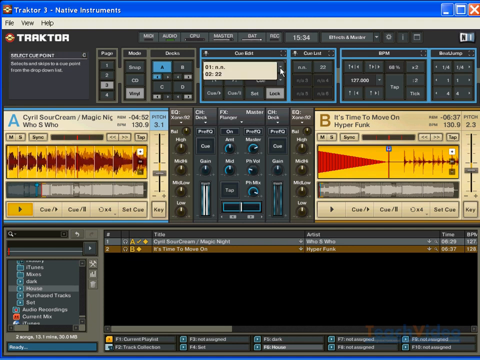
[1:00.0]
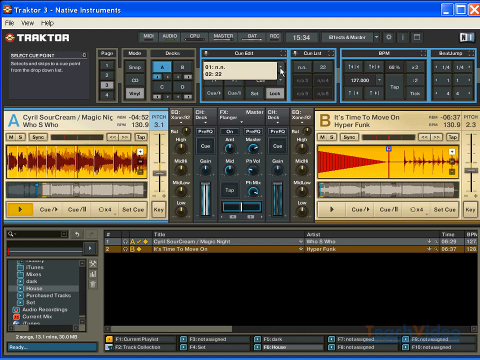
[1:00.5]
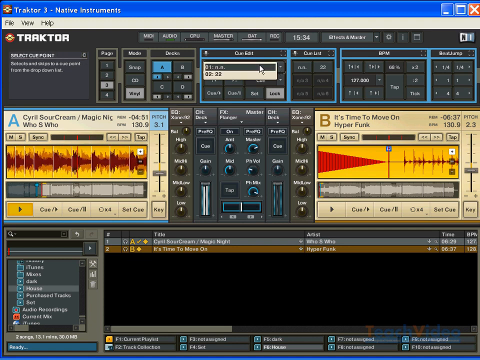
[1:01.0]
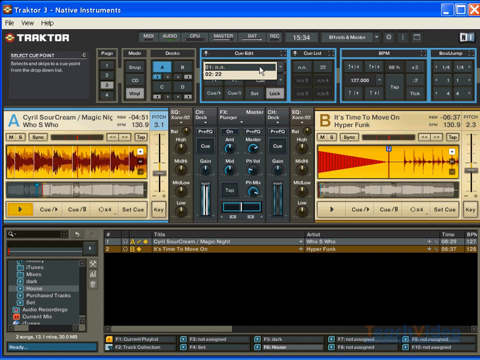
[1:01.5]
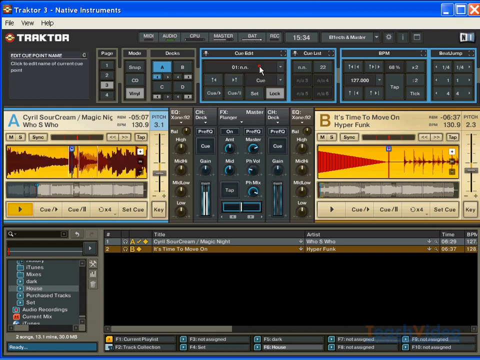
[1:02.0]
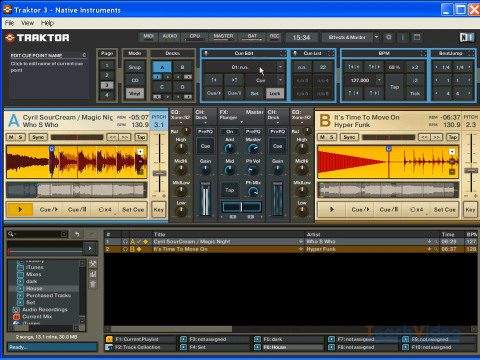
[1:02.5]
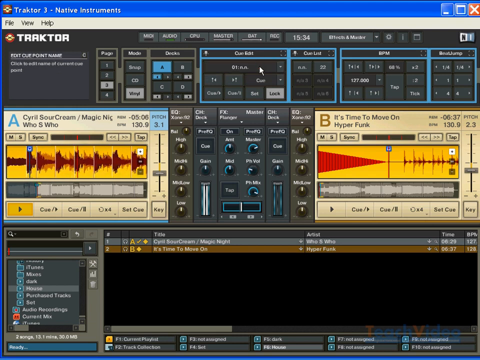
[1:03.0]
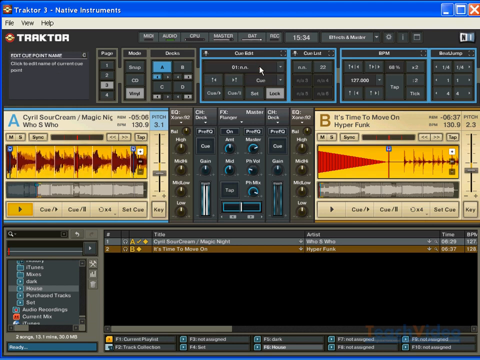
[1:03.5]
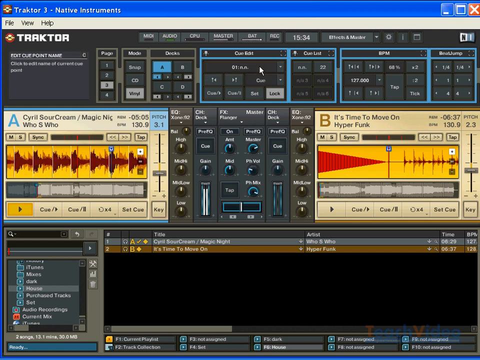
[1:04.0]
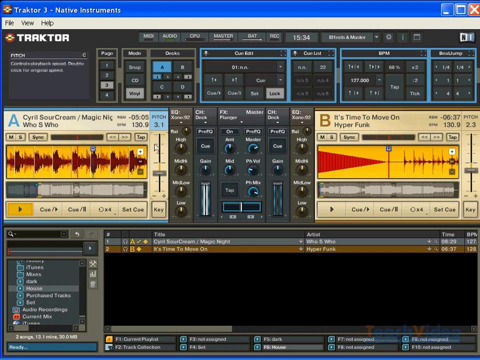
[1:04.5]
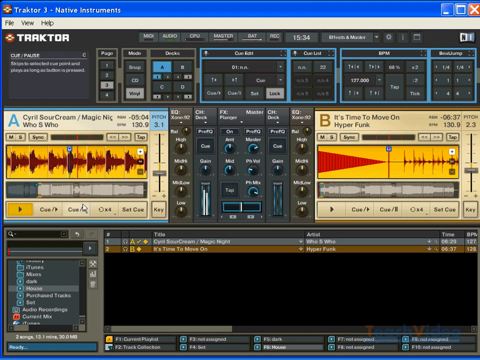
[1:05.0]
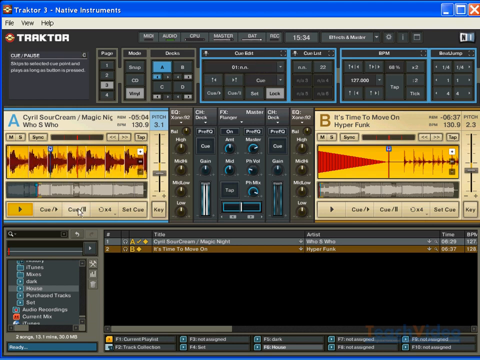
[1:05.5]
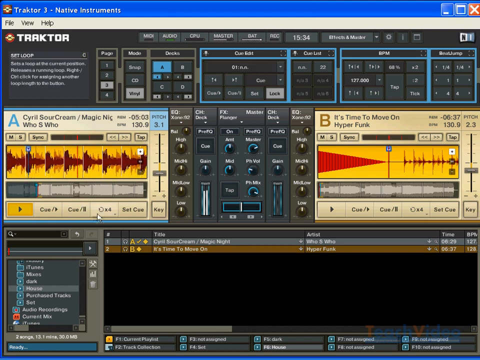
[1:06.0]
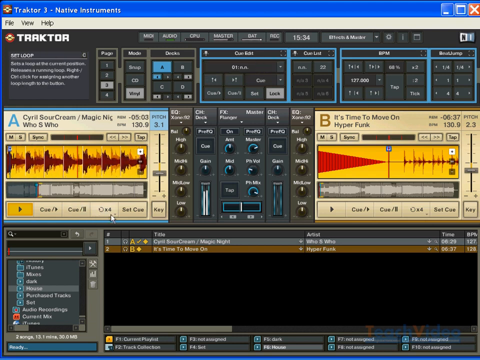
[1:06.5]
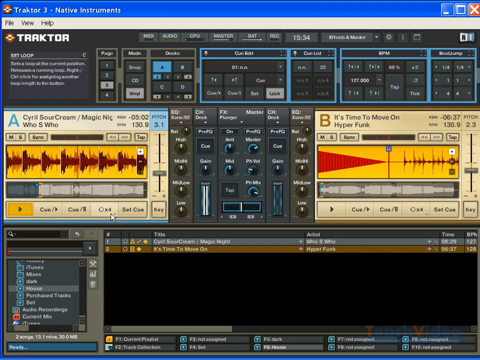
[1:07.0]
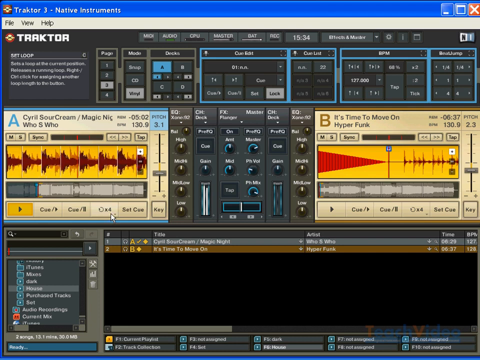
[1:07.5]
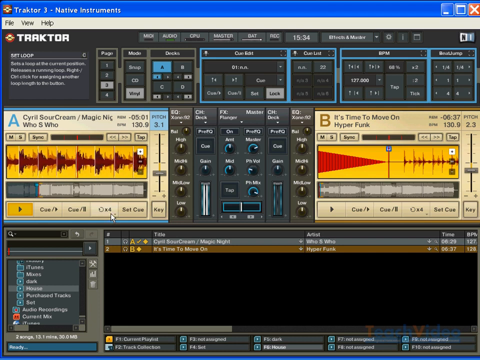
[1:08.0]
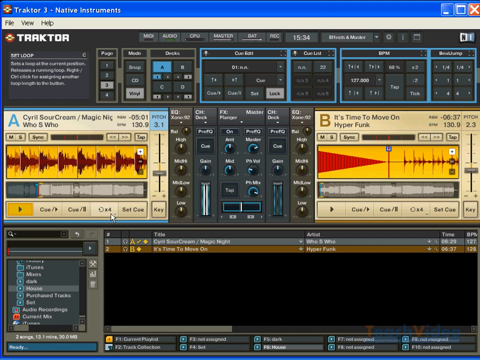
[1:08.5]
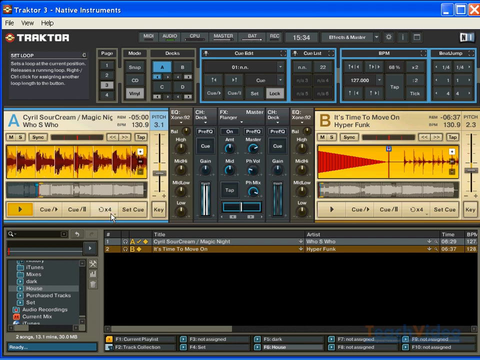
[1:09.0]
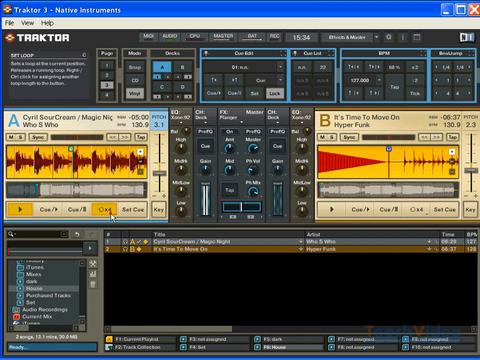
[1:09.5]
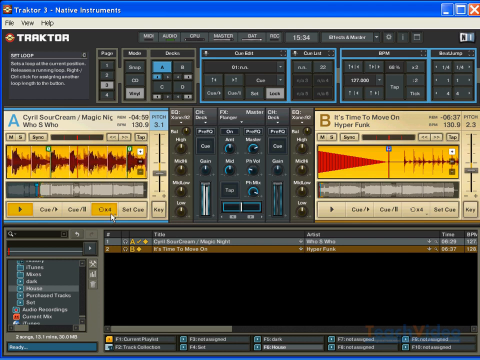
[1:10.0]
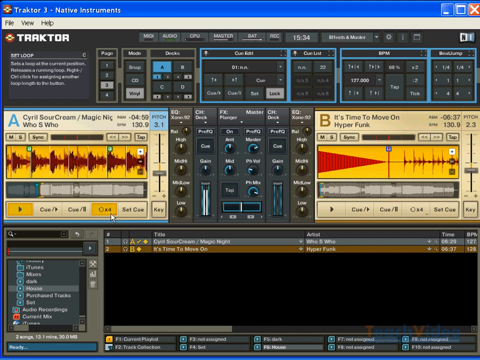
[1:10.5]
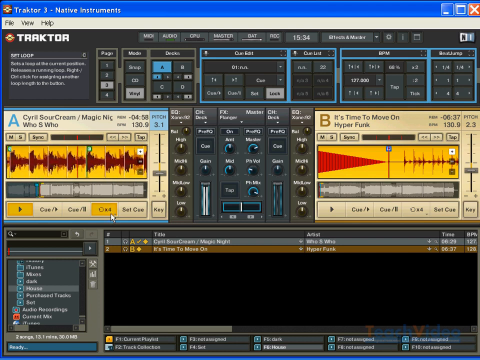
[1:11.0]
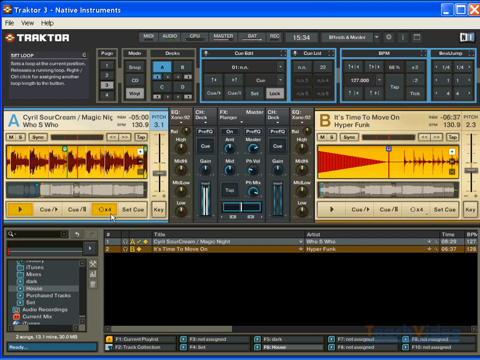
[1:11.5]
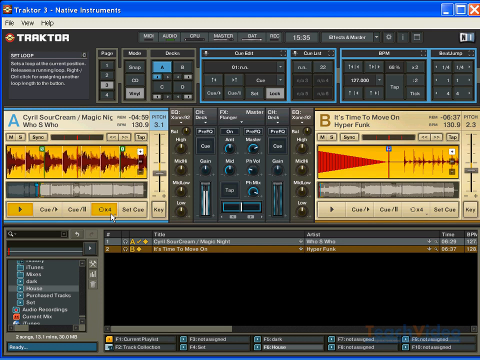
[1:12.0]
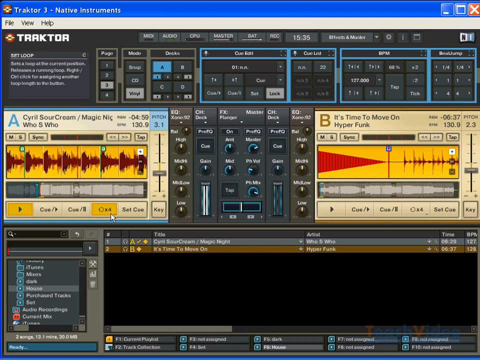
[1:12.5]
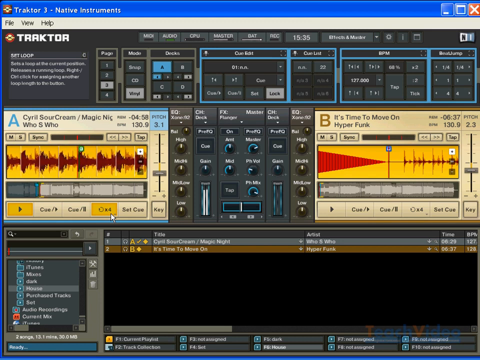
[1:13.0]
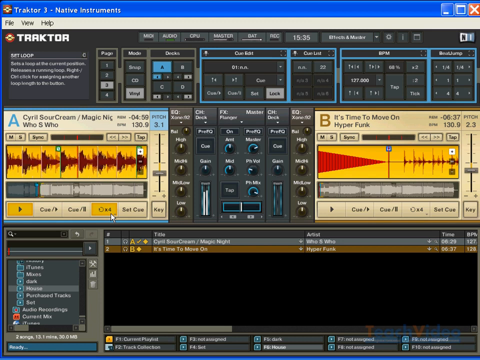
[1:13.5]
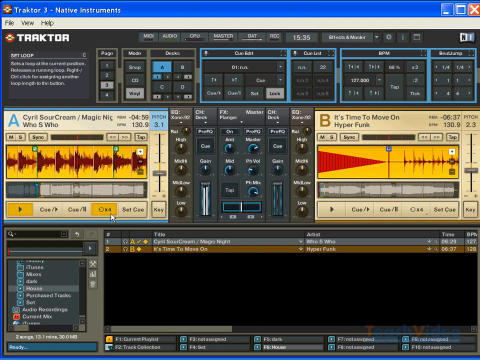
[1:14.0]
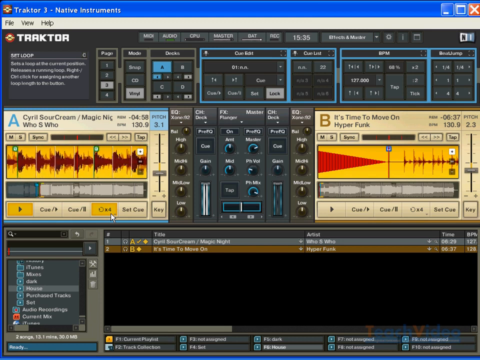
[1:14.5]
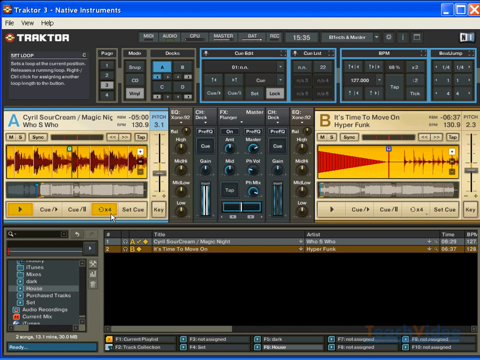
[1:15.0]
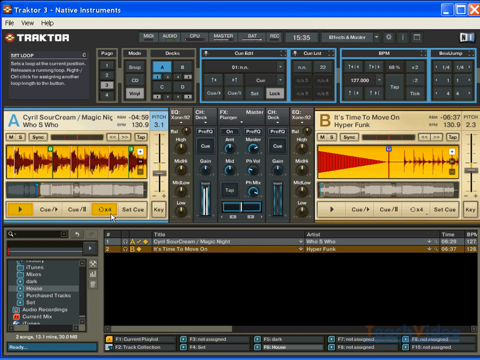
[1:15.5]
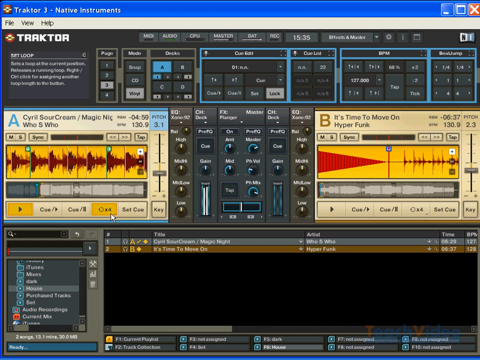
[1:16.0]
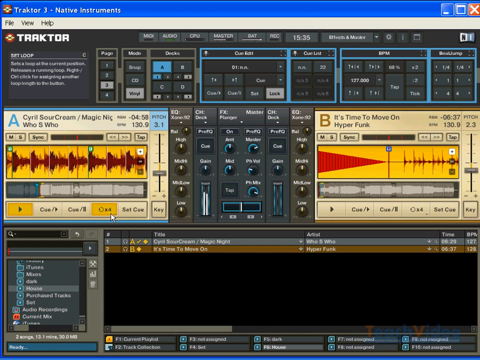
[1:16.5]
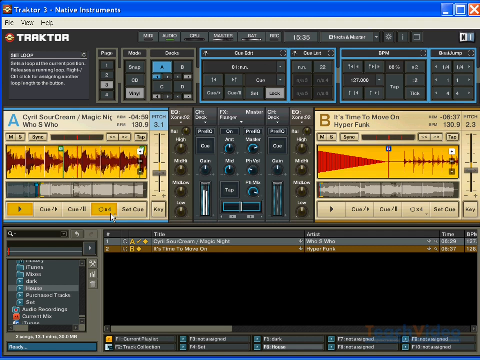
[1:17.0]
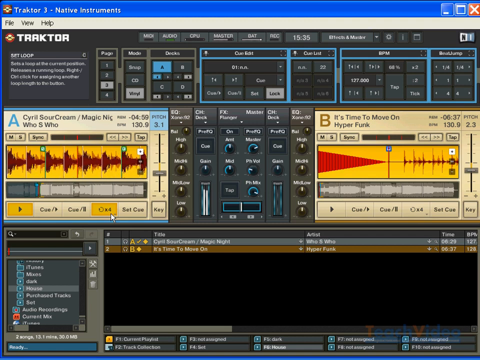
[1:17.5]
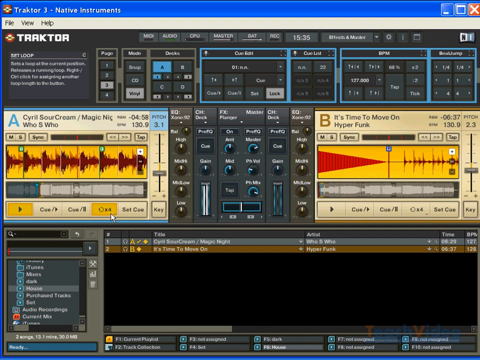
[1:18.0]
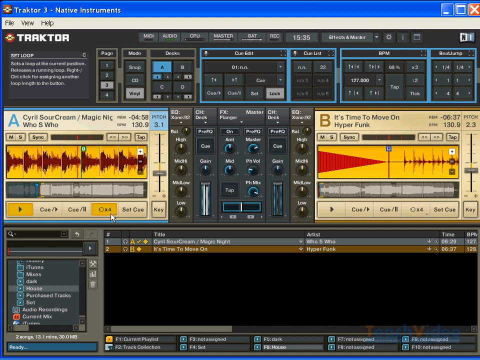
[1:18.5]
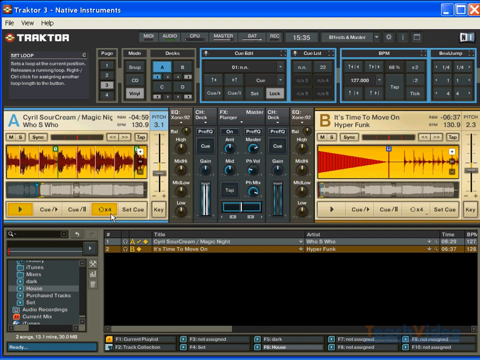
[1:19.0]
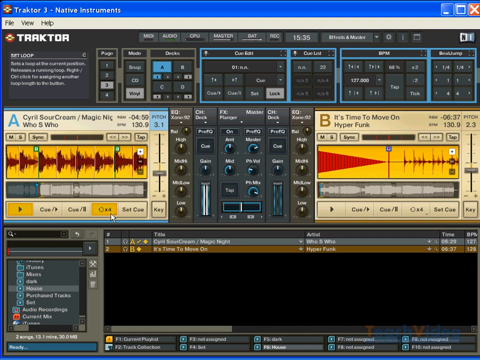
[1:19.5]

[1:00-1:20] In the same software program, the mouse comes down from the Cue Edit box at the top middle of the screen to the button to the right of the Q/pause button. This button has a circular arrow going clockwise and reads "x4". The mouse clicks it and the button turns yellow; nothing else noticeably changes. The yellow rectangle with the red sound waves, in the middle of the left side of the screen, keeps moving from right to left, and clicking the x4 button does not seem to affect its speed. The play button remains selected with a yellow background.